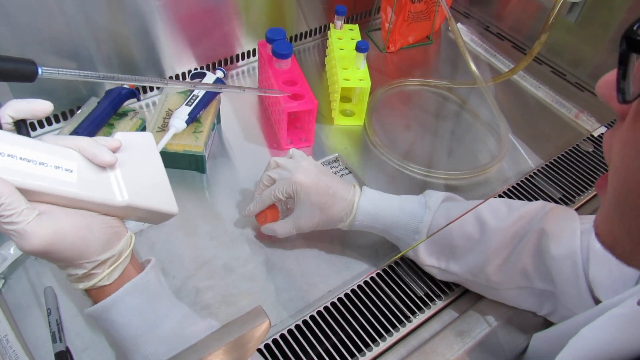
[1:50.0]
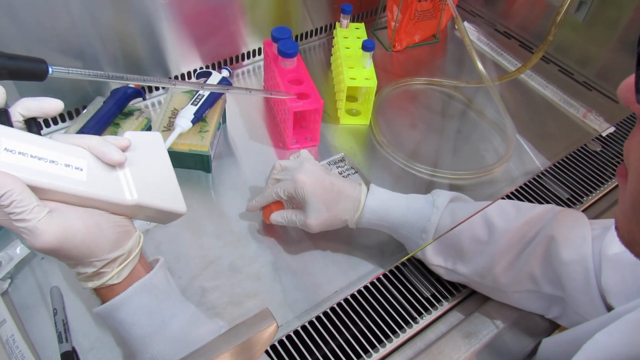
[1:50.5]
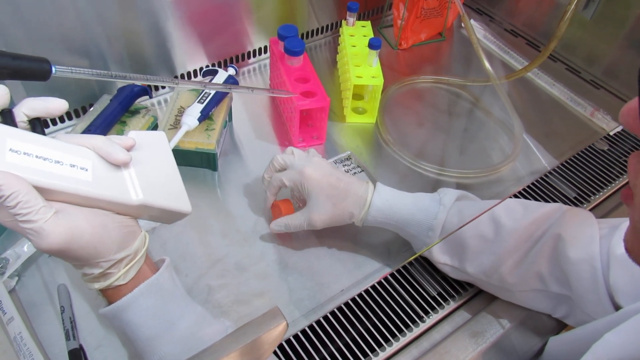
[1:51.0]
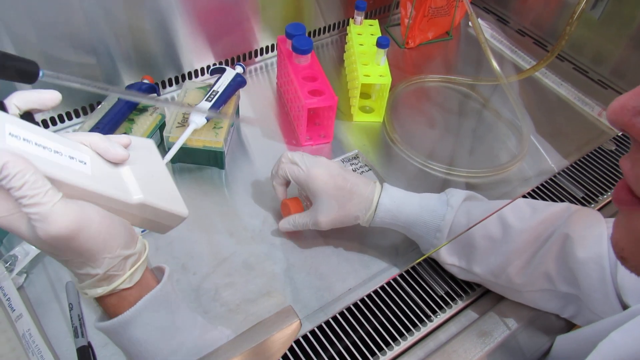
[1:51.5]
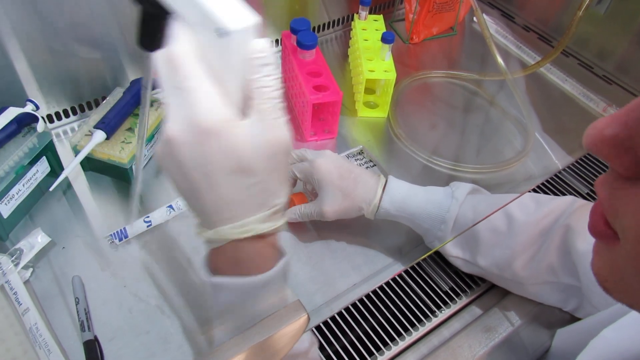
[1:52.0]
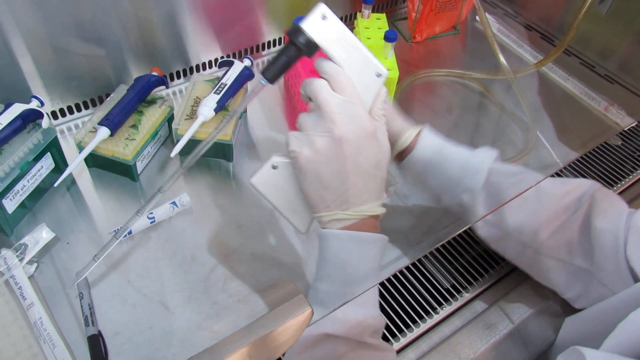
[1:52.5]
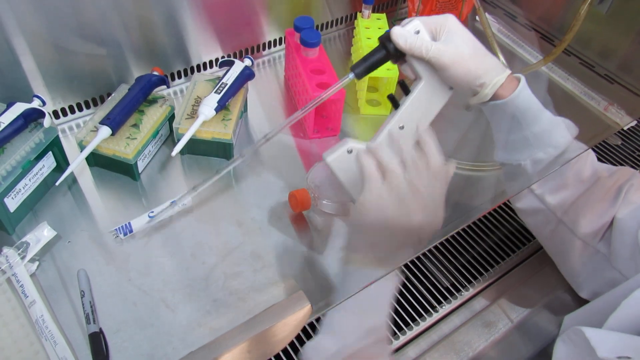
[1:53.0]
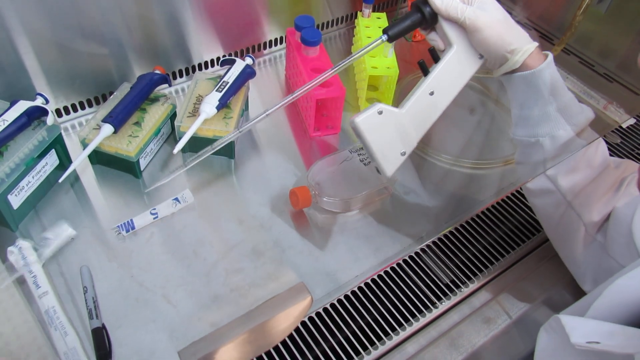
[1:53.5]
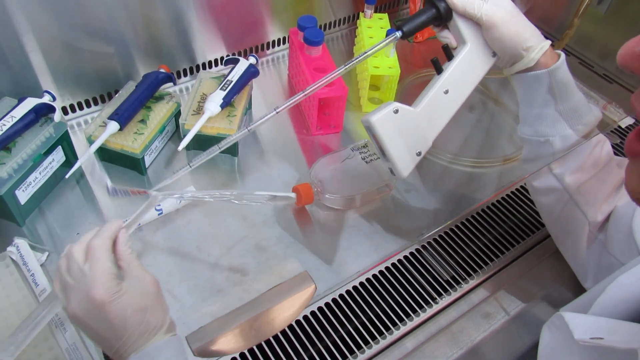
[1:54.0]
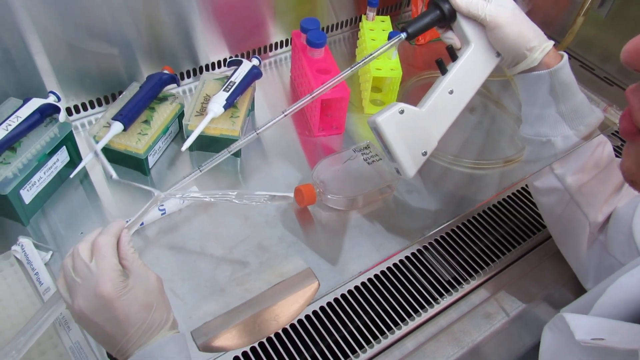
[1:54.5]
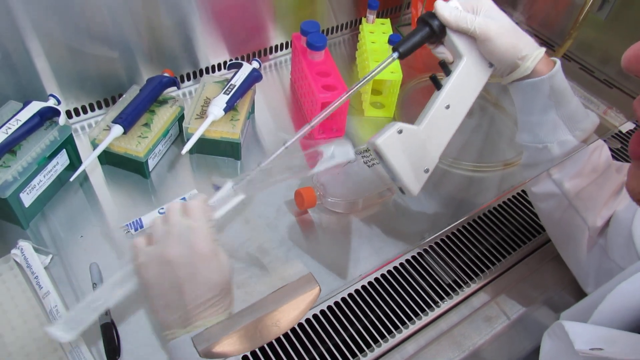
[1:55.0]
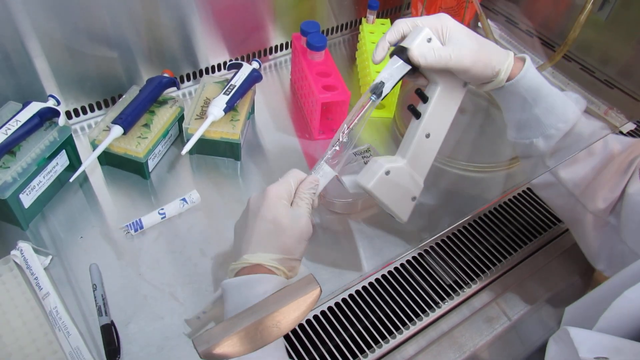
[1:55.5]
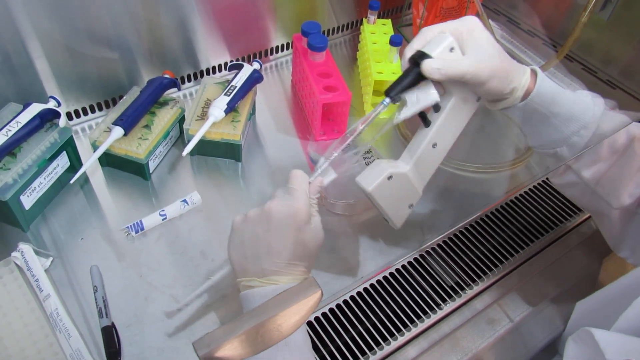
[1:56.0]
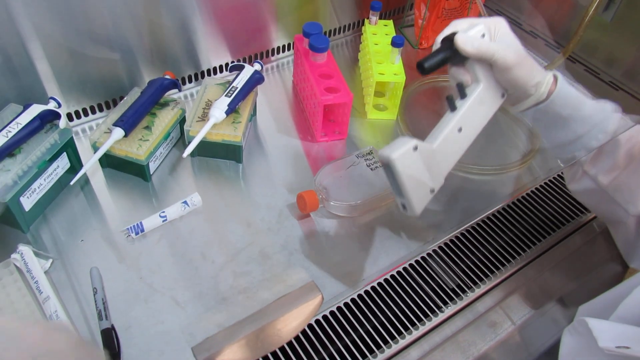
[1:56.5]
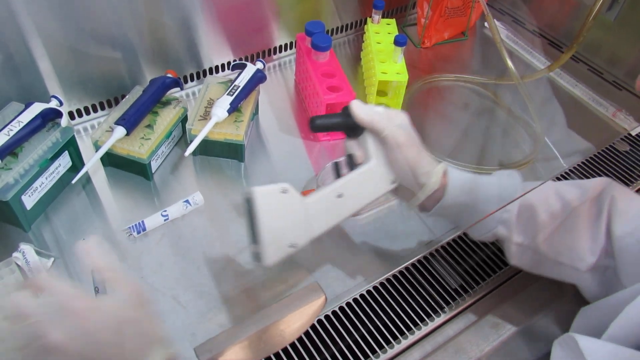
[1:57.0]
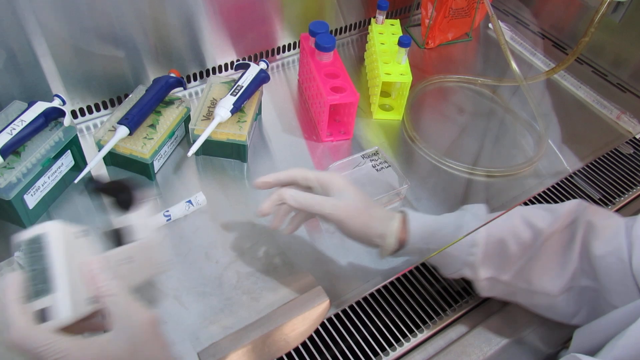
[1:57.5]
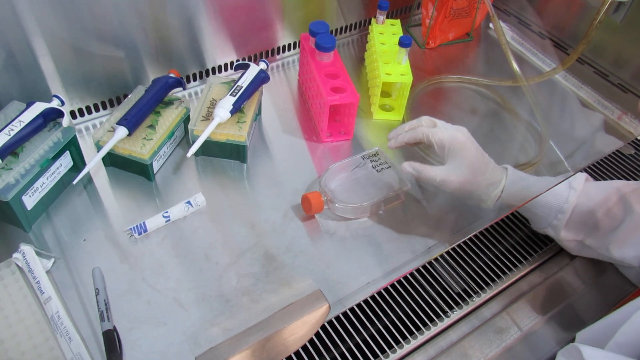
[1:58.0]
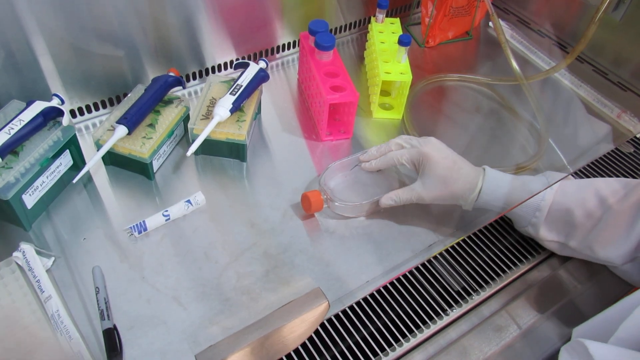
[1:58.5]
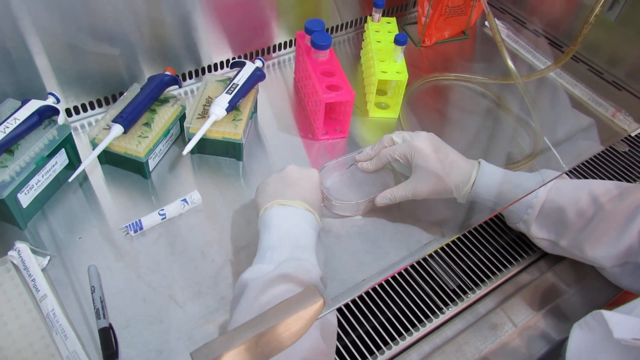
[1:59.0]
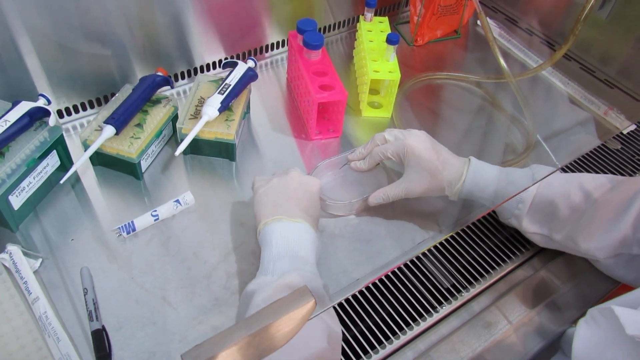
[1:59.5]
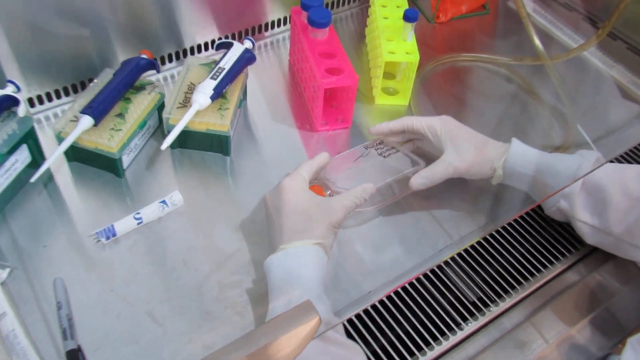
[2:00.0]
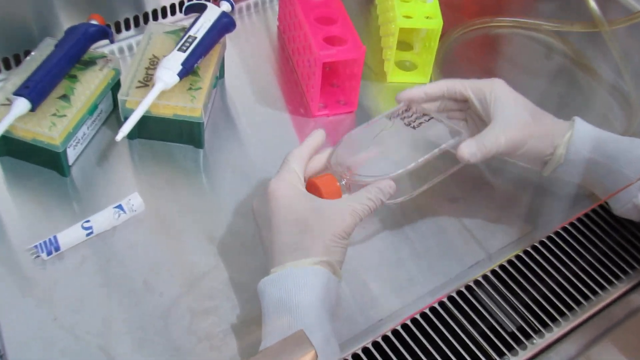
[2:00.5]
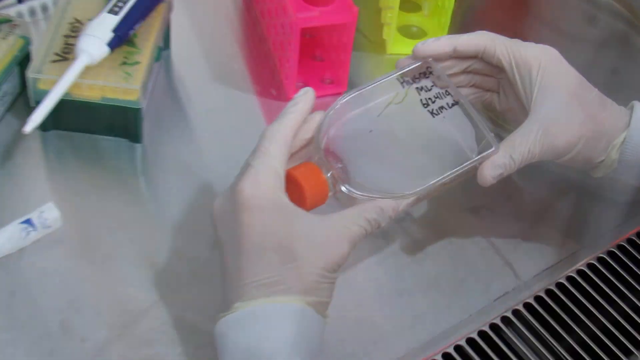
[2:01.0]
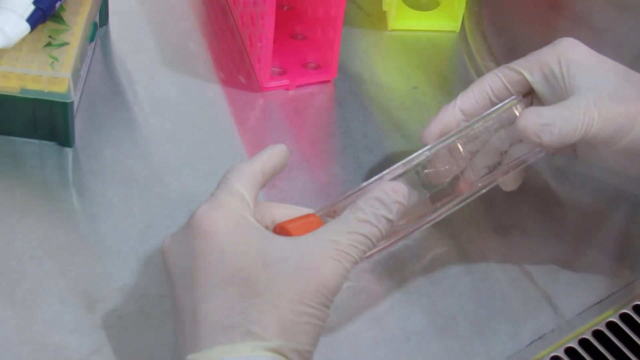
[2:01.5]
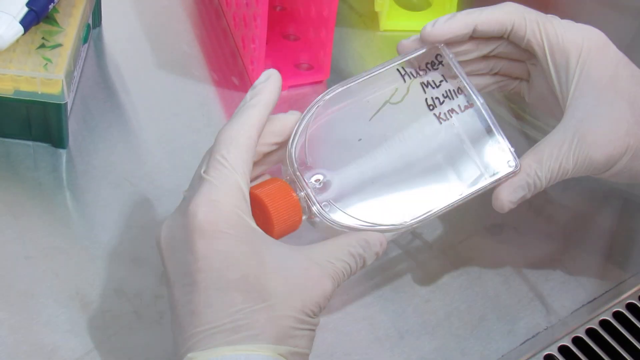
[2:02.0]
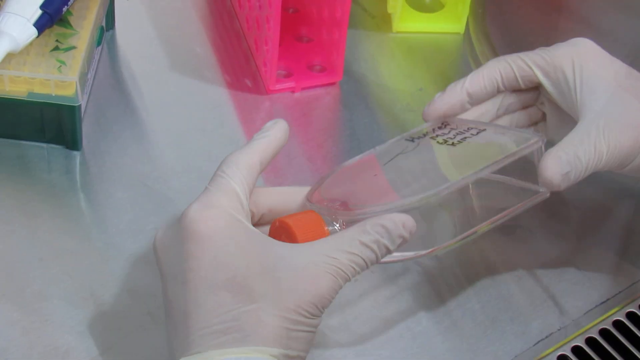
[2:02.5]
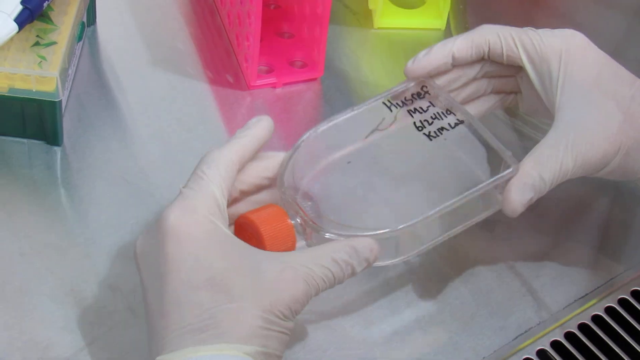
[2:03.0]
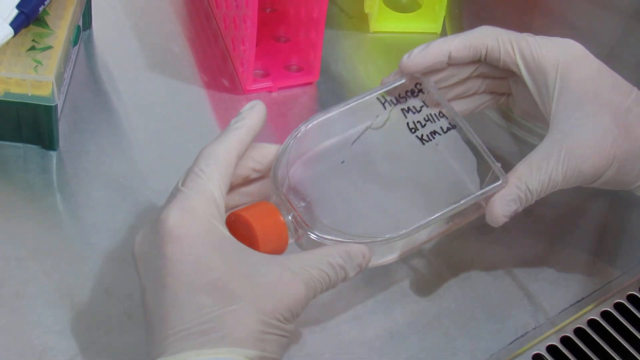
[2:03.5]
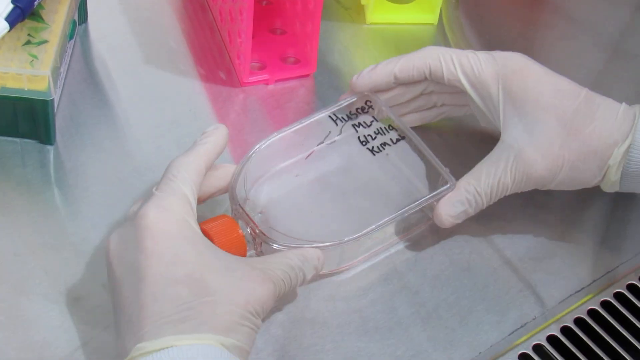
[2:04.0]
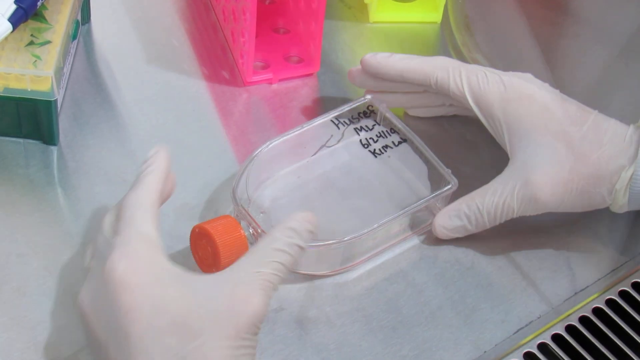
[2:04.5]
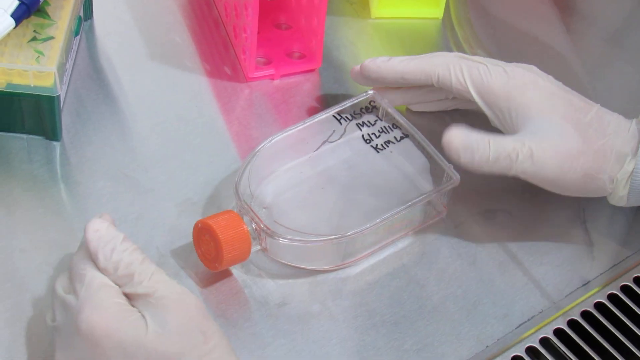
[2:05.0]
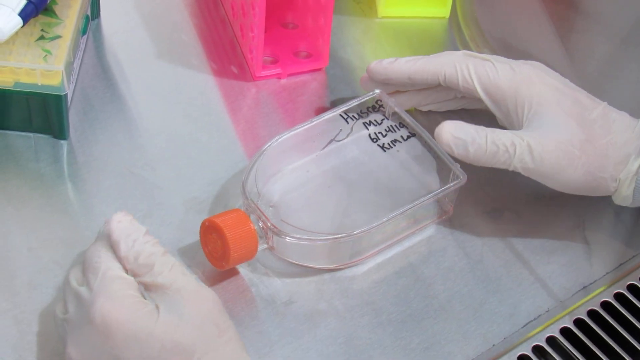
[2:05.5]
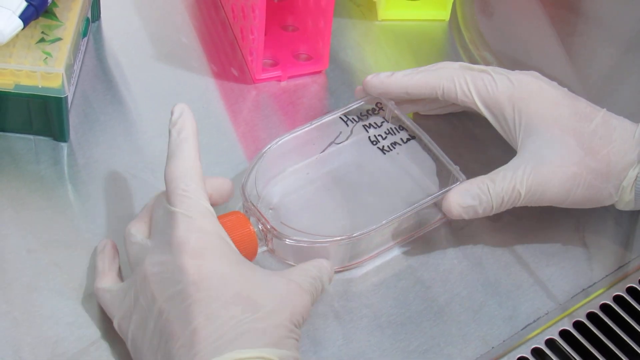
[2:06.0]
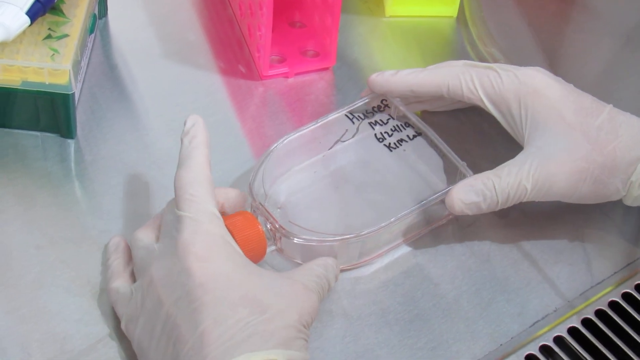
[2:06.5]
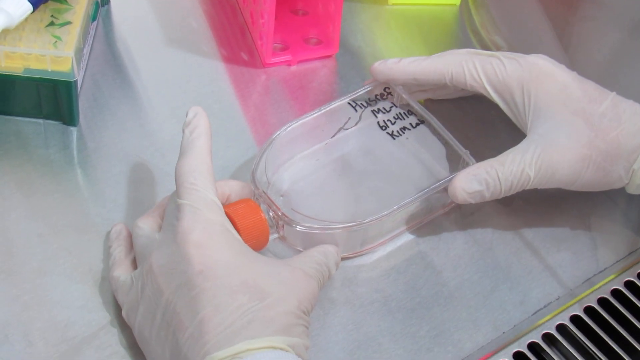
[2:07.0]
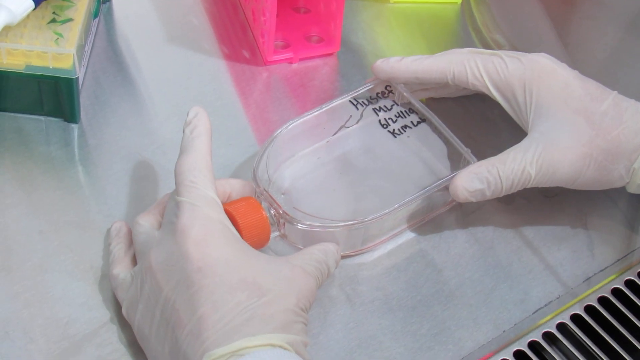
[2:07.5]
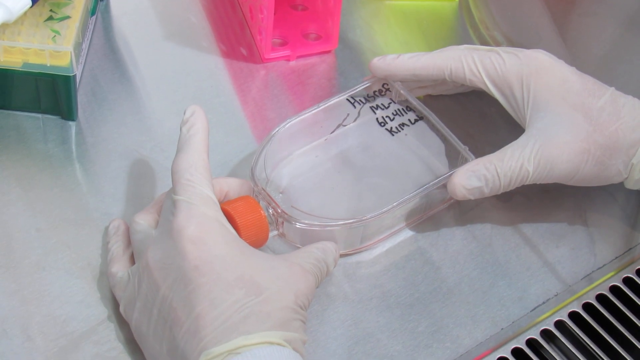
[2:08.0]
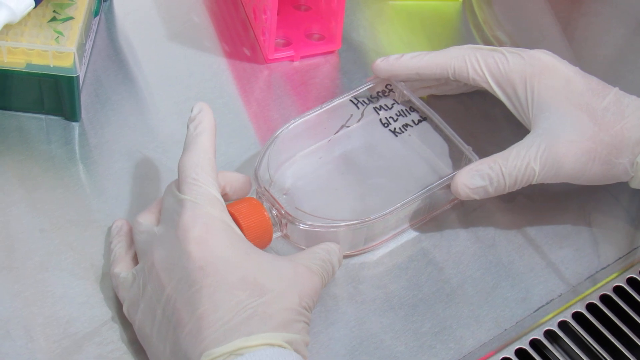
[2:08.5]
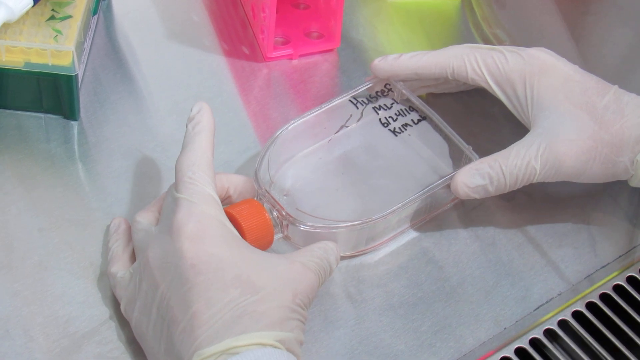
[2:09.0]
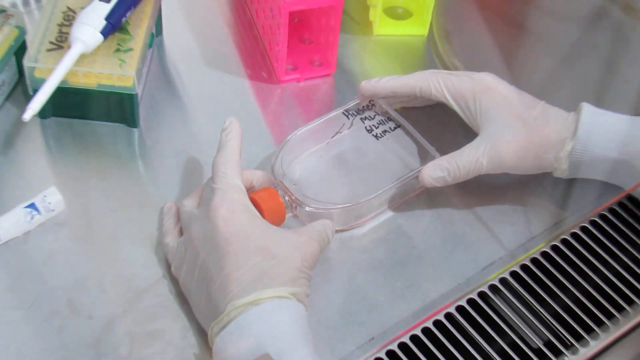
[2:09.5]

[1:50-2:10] The person's glasses are visible in a close-up left side profile; the view is zoomed in so much that it is unclear whether the person is a man or a woman. A nose, the side of the lips, and a white laboratory jacket are visible. A hand holds the orange bottle lid, using a pointer finger, and twists it back on. The person switches the pipette apparatus into the right hand, releases the long pipette, and puts both of them down. They then hold the clear bottle with the orange lid in both hands and slide it side to side, probably to mix its contents well.